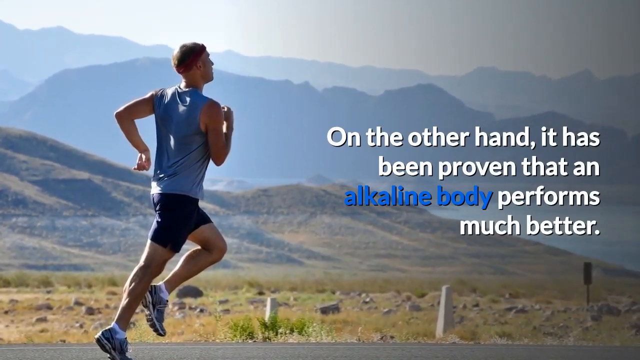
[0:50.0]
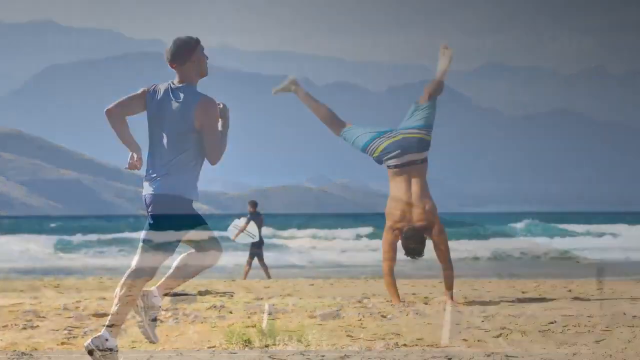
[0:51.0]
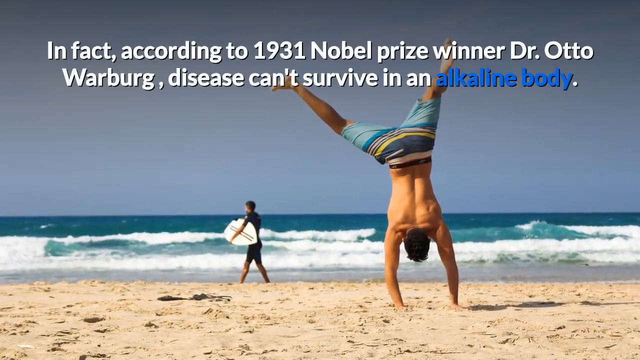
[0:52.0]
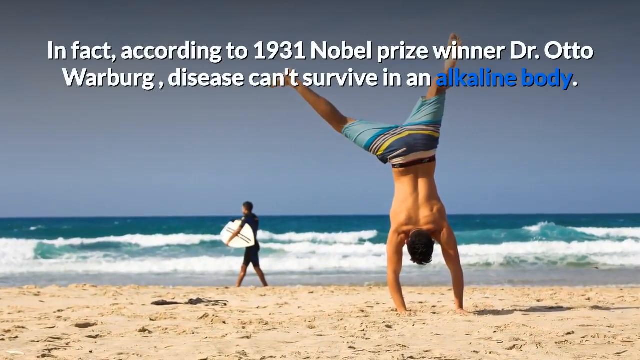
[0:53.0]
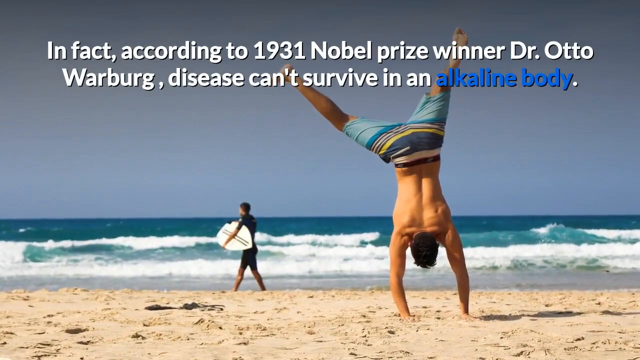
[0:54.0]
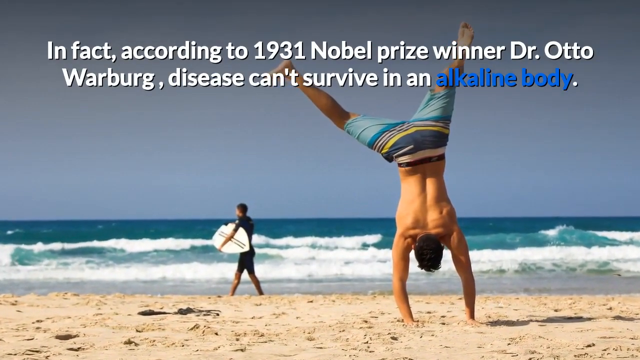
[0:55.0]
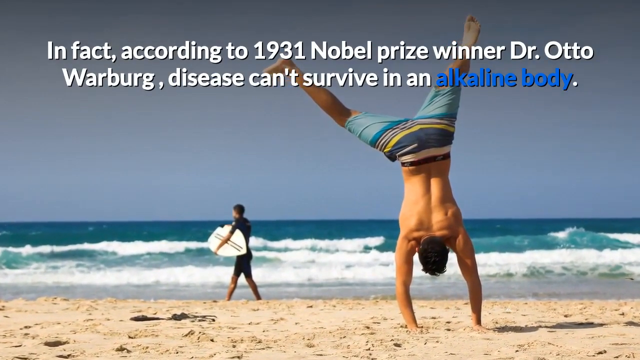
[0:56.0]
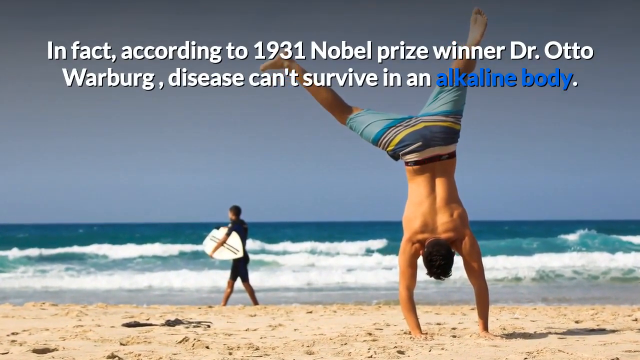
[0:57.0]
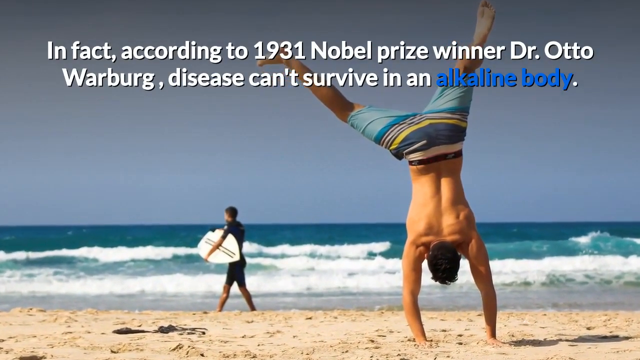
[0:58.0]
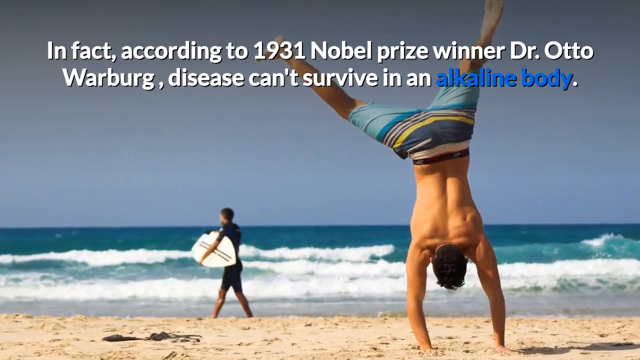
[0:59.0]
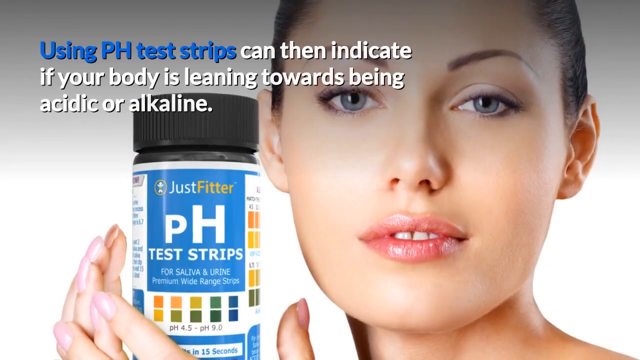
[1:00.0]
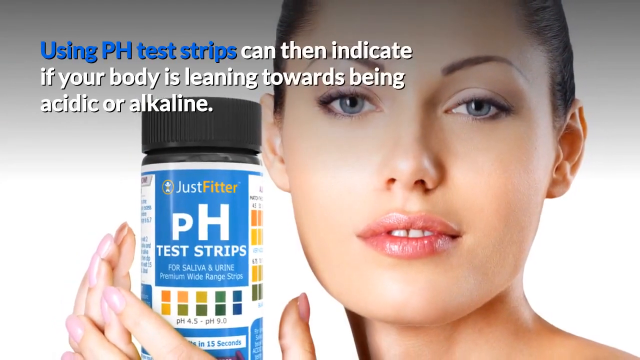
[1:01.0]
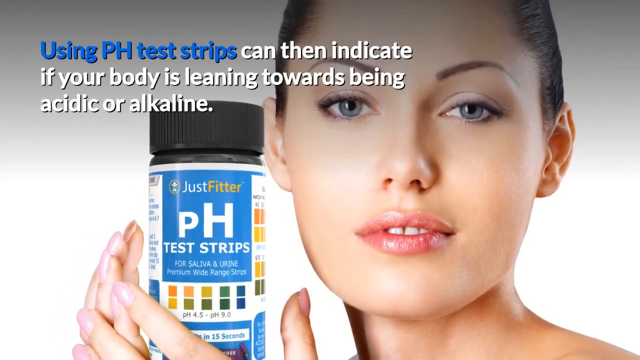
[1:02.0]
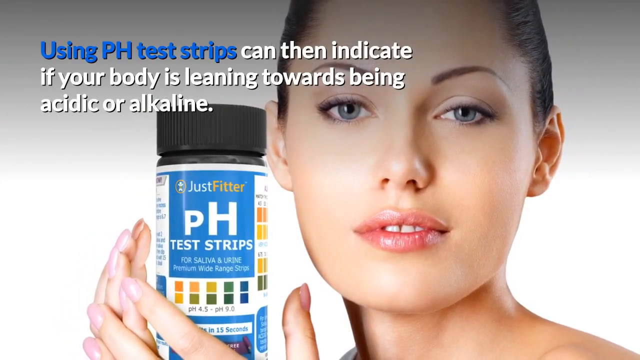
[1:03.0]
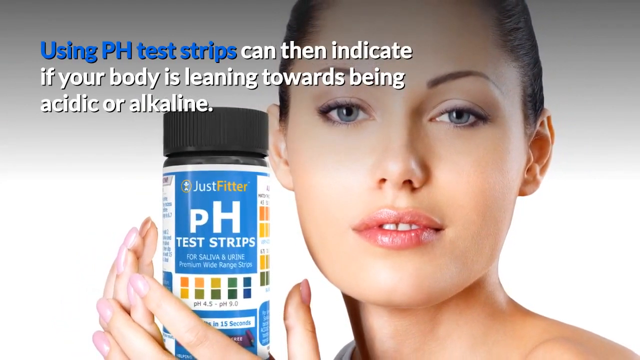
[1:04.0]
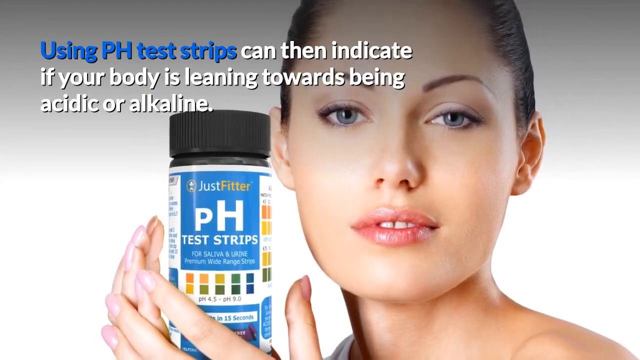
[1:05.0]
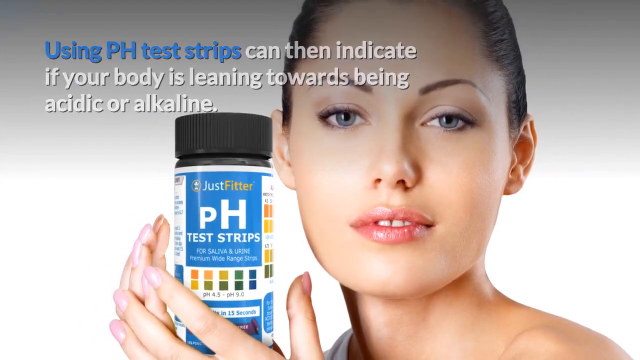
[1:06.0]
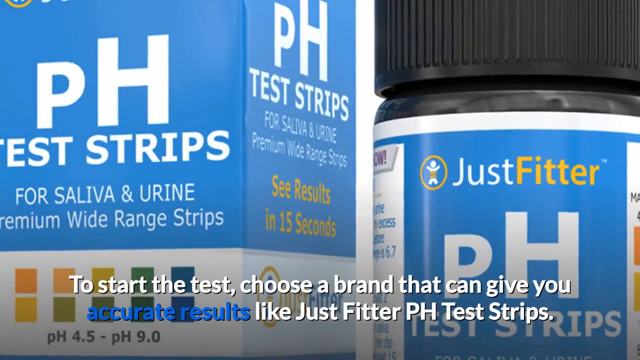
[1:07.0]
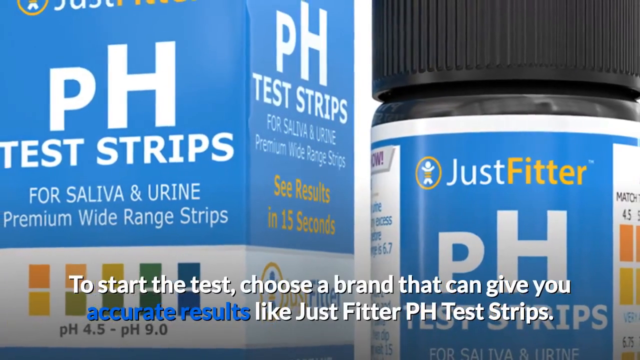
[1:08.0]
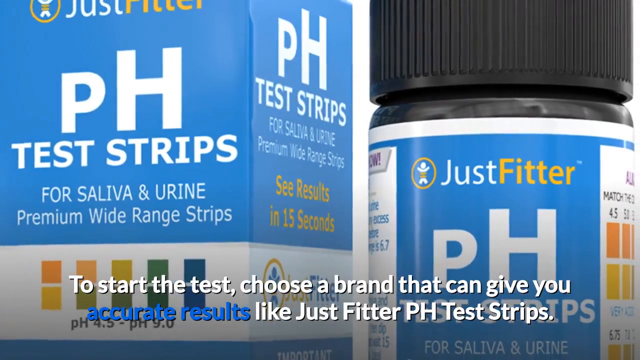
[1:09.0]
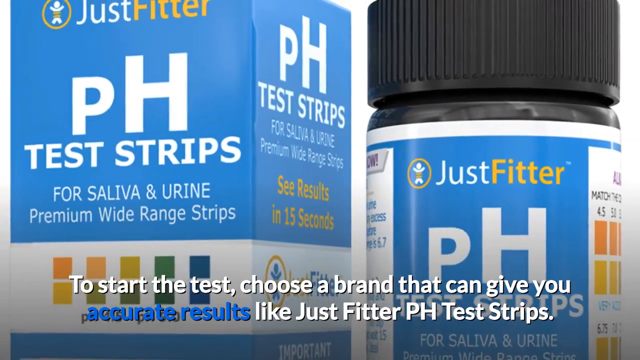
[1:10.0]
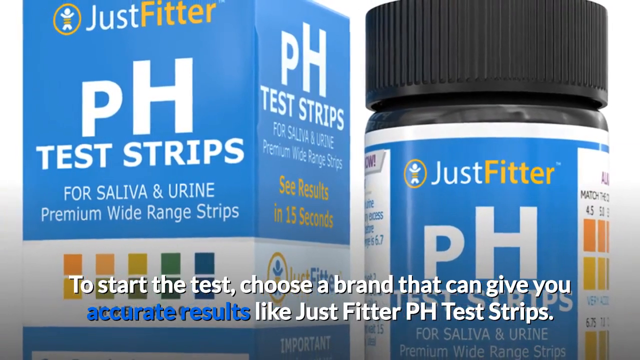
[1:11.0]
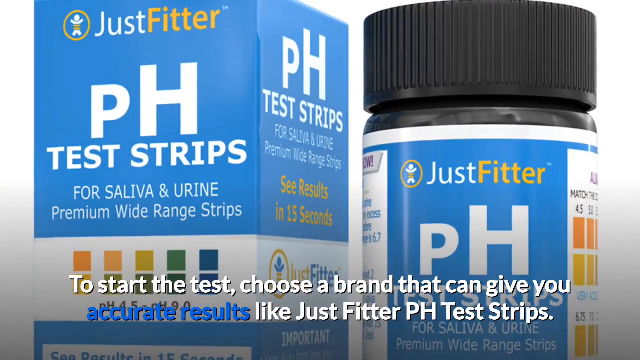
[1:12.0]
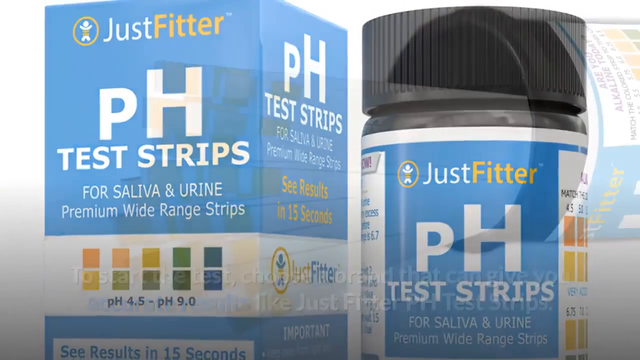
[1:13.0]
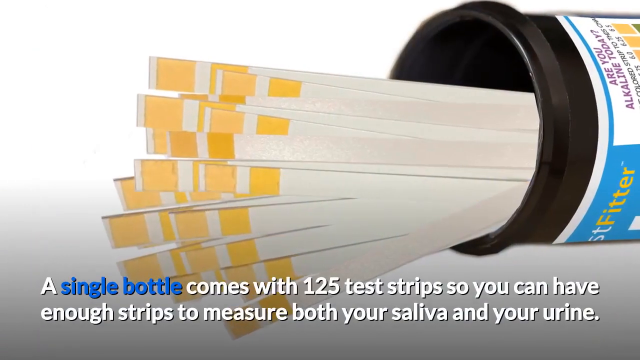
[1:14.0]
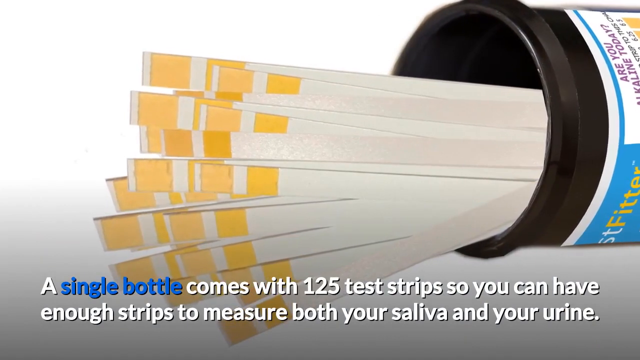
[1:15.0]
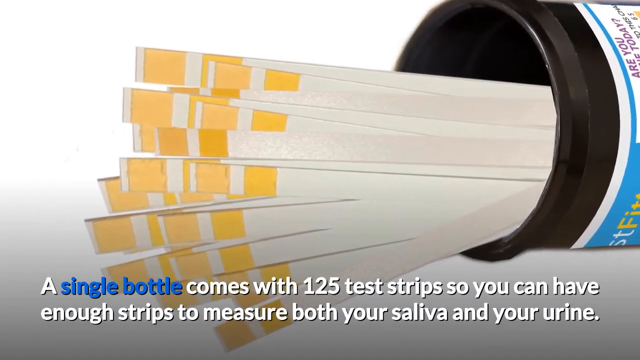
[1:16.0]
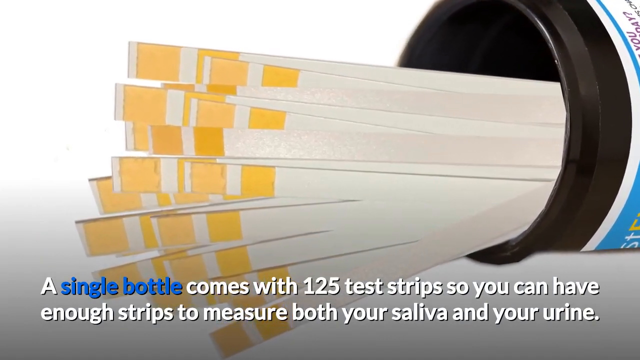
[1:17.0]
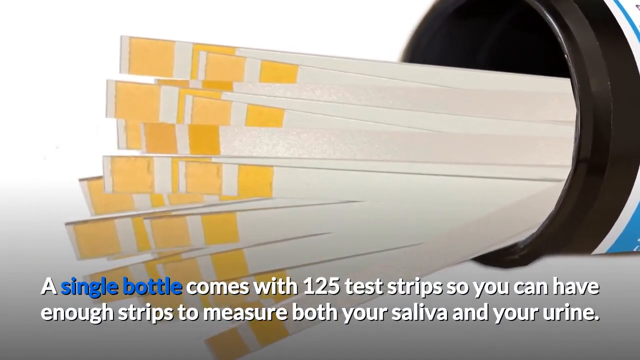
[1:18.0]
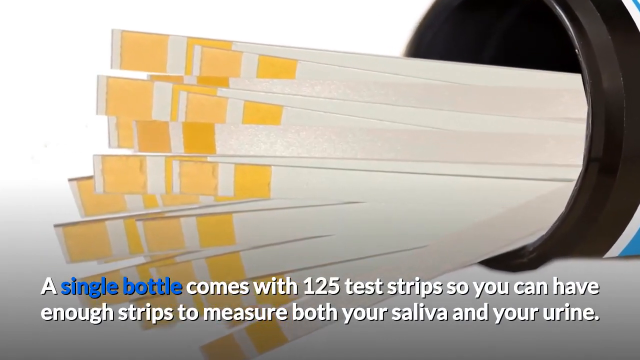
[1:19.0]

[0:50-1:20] Another slide reads "acid and alkaline levels are important factors that impact your body's overall condition." The video cuts to a slide showing someone running down a road with large hills and mountains behind them. The runner wears a blue tank top, a headband, black shorts above the knee, and running shoes. On the right side of the image, text reads "on the other hand it has been proven that an alkaline body performs much better," with "alkaline body" in blue. It then cuts to someone doing a handstand on a beach, not wearing a shirt and wearing swimming trunks. Text at the top of the screen reads "in fact according to 1931 noble prize winner Dr Otto Warburg disease can't survive in an alkaline body."